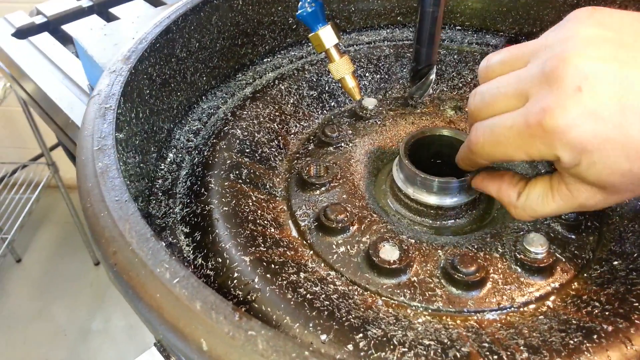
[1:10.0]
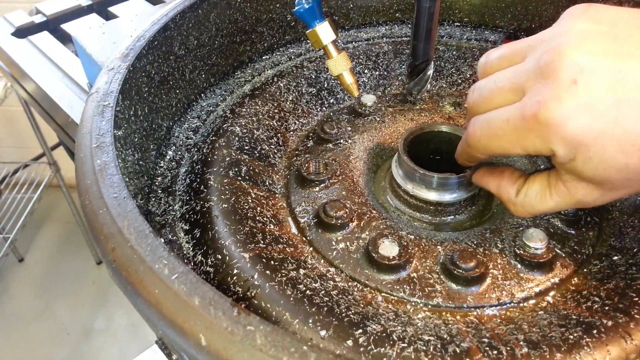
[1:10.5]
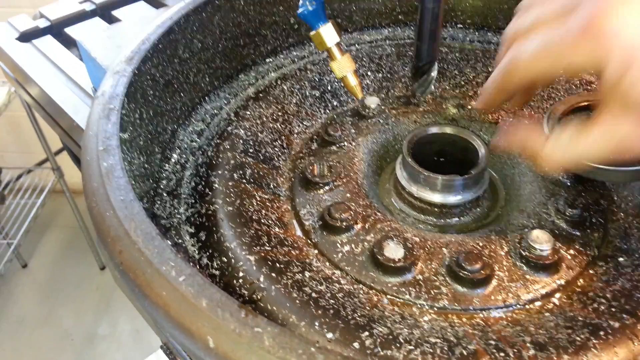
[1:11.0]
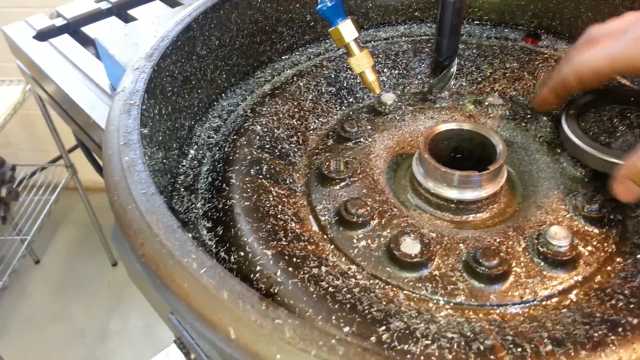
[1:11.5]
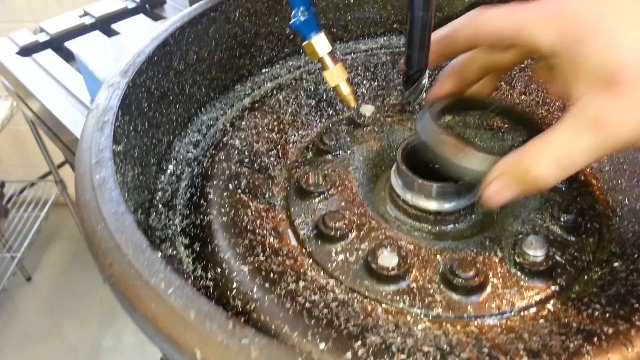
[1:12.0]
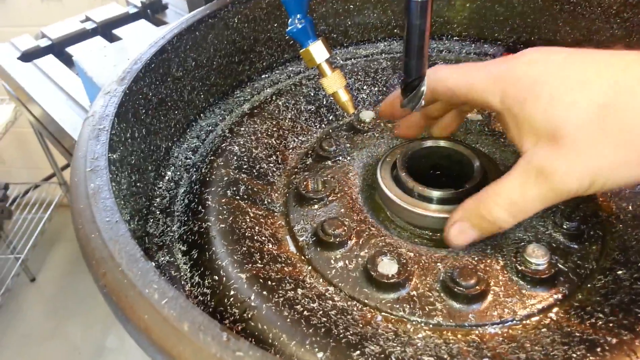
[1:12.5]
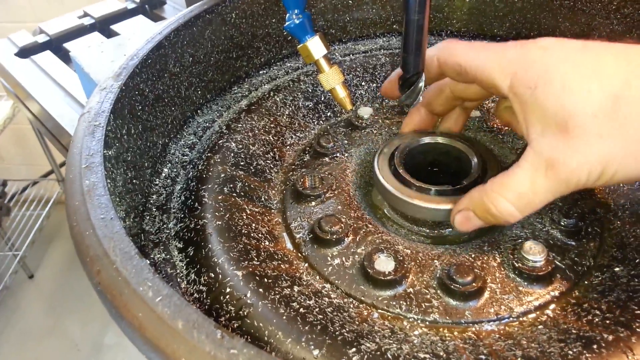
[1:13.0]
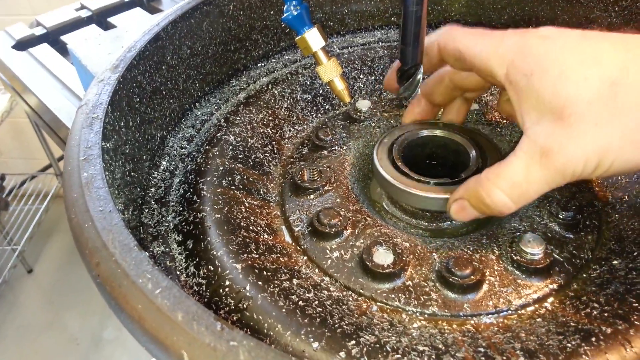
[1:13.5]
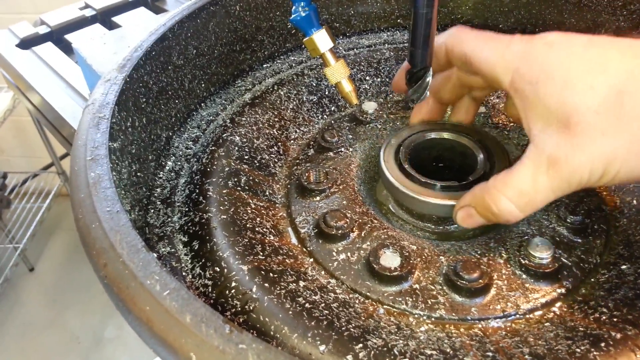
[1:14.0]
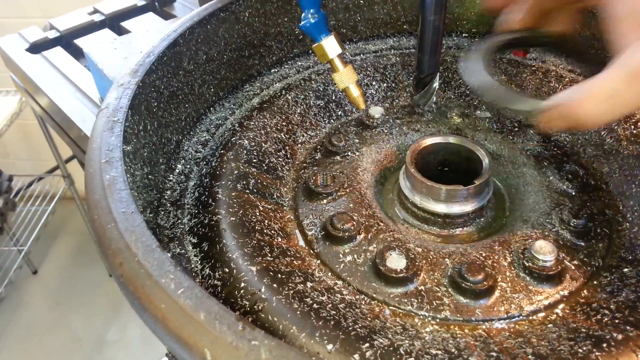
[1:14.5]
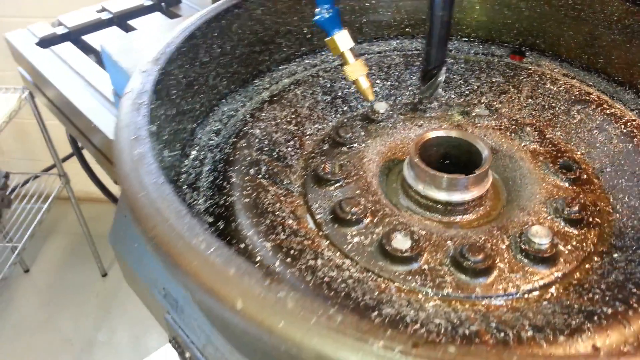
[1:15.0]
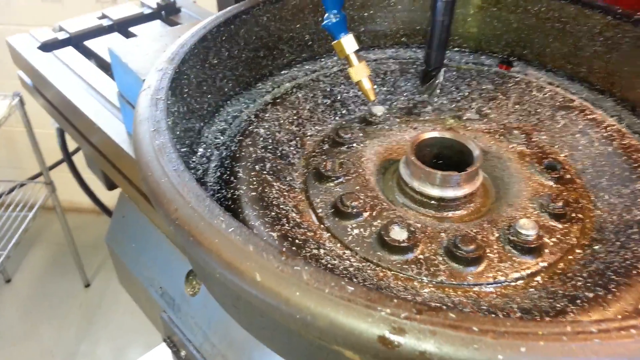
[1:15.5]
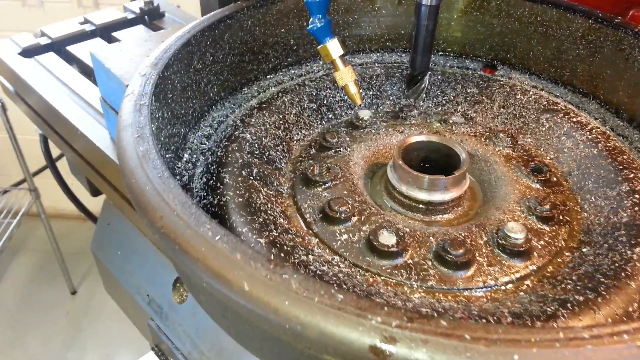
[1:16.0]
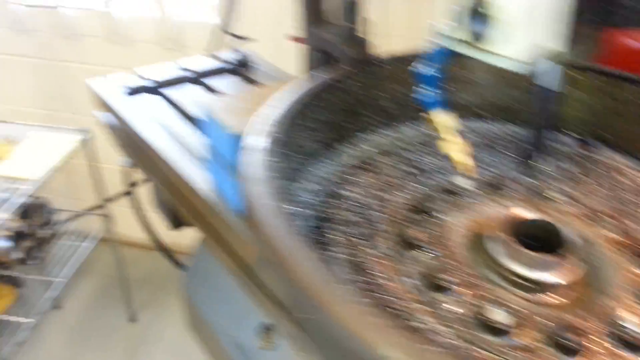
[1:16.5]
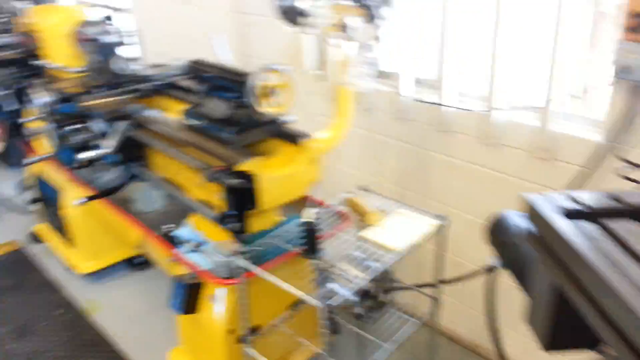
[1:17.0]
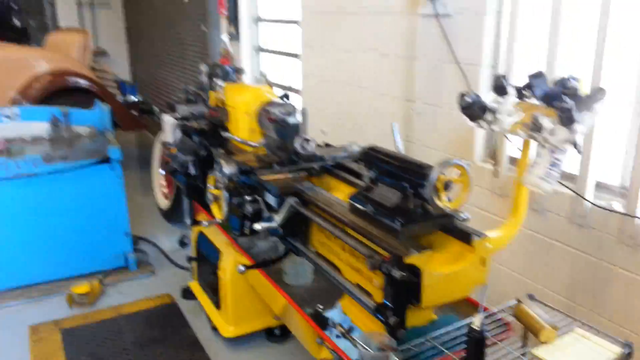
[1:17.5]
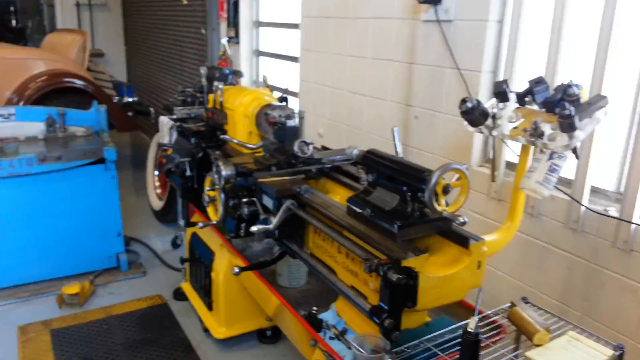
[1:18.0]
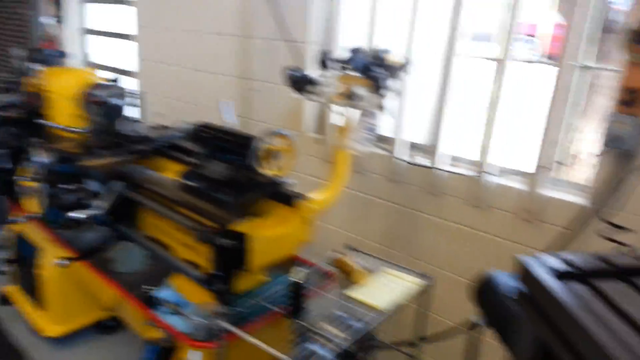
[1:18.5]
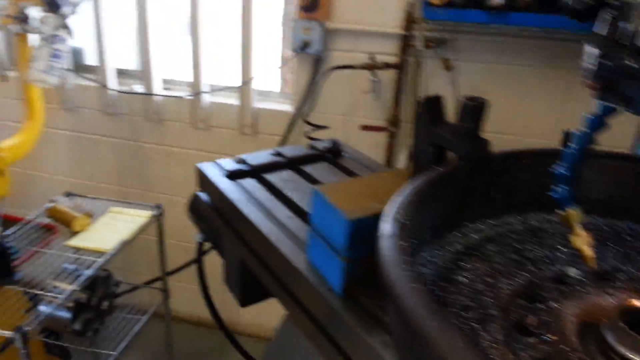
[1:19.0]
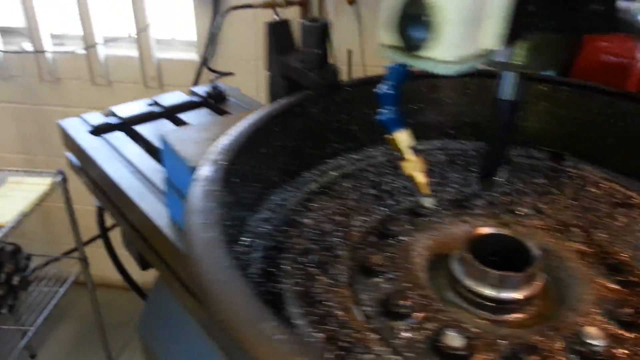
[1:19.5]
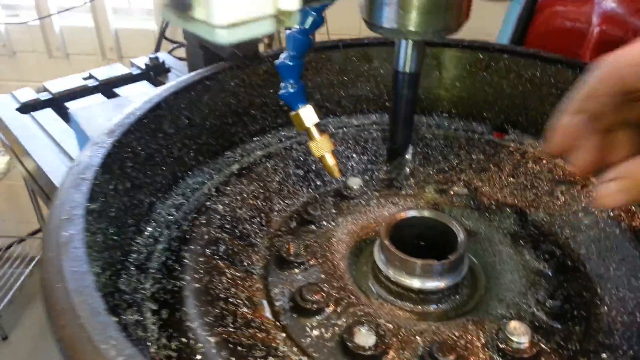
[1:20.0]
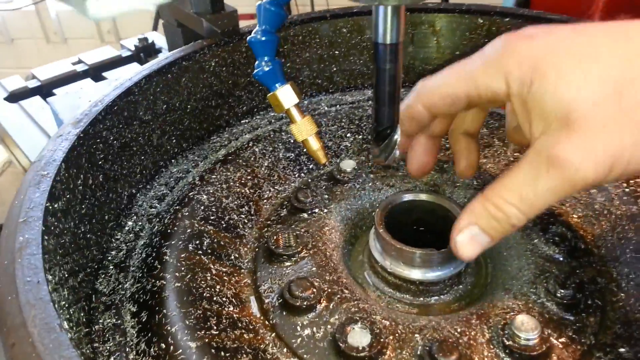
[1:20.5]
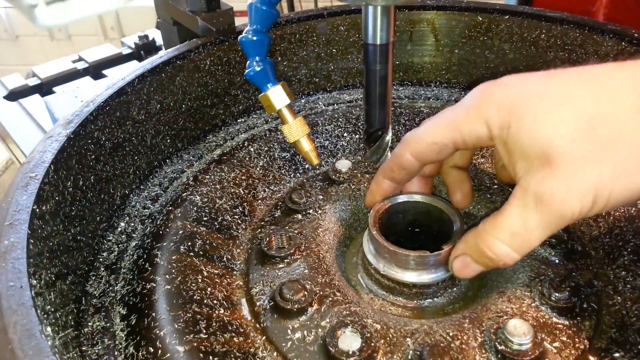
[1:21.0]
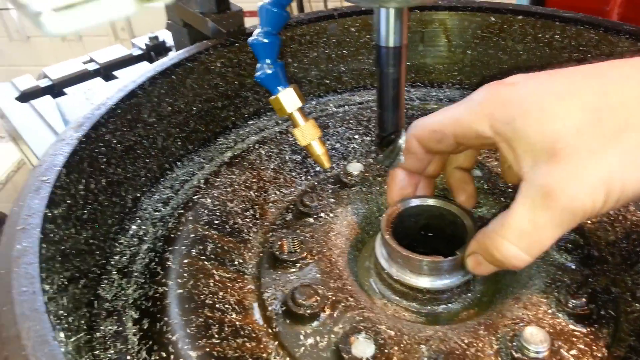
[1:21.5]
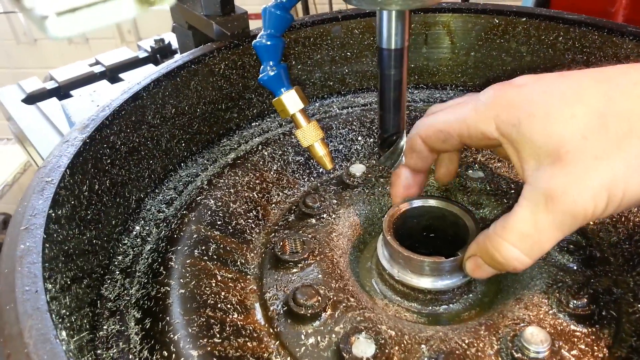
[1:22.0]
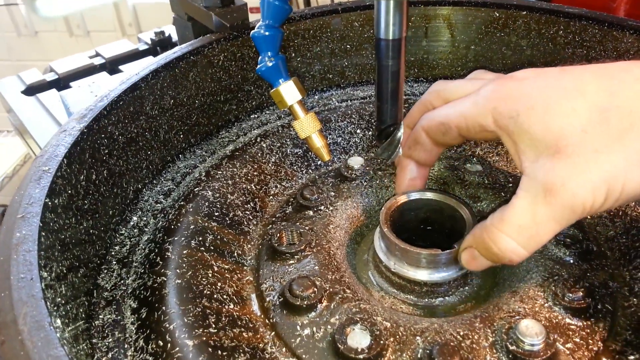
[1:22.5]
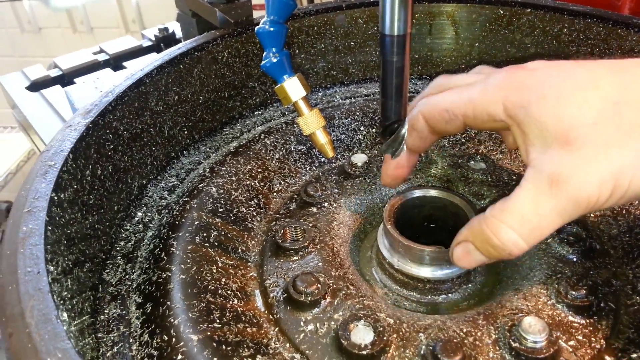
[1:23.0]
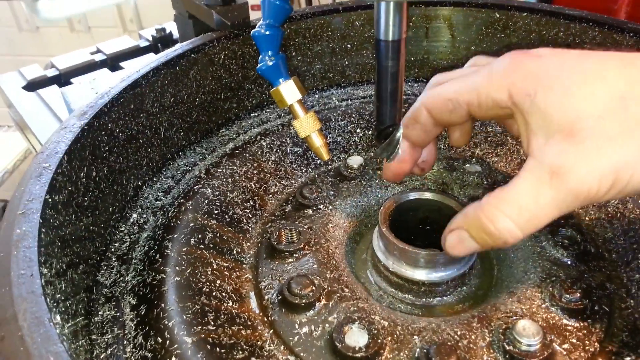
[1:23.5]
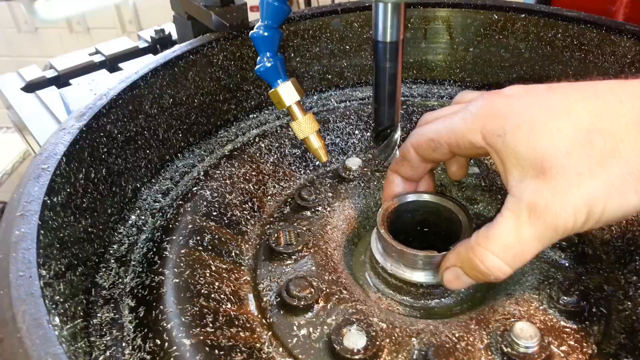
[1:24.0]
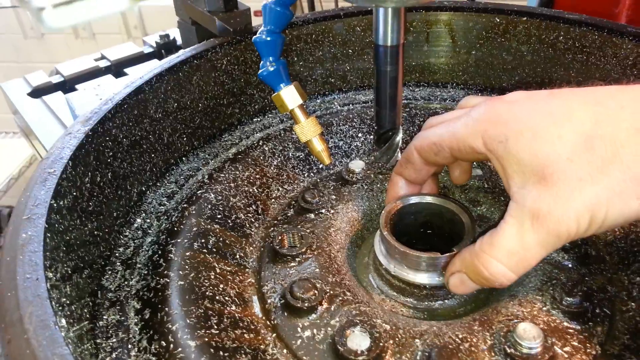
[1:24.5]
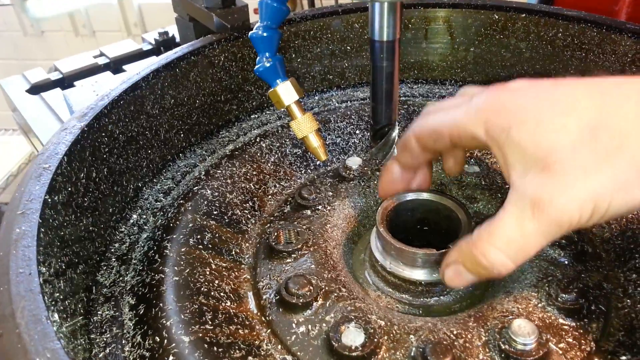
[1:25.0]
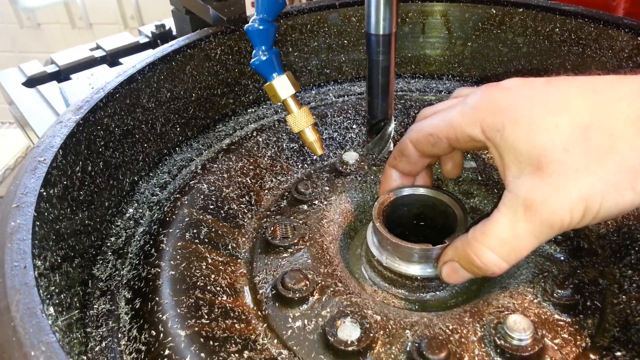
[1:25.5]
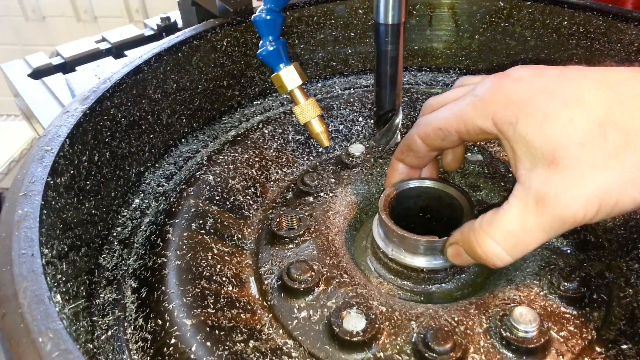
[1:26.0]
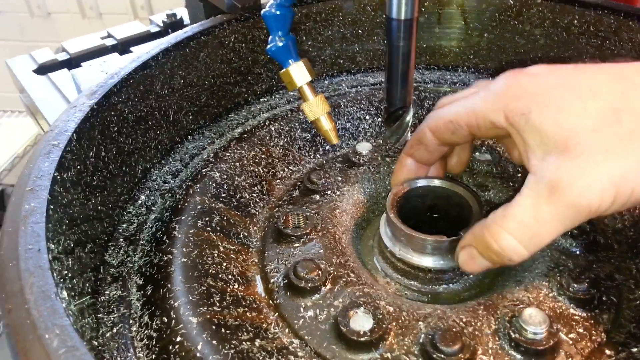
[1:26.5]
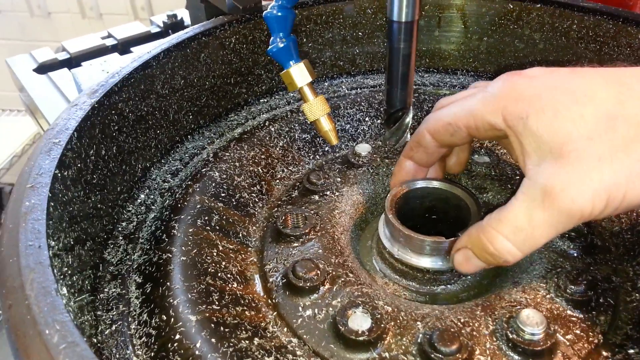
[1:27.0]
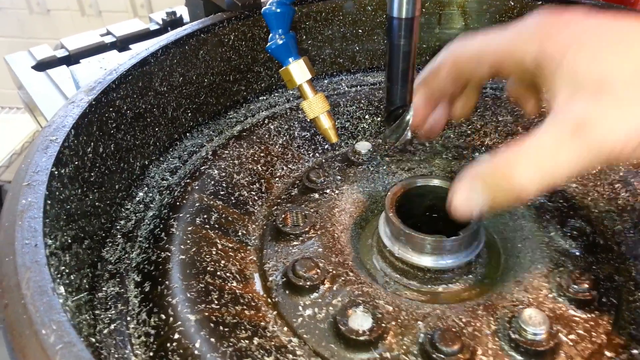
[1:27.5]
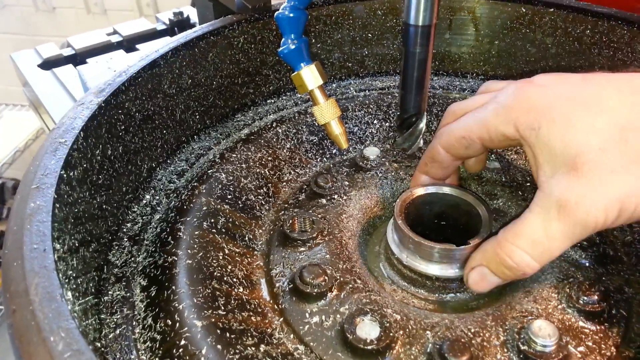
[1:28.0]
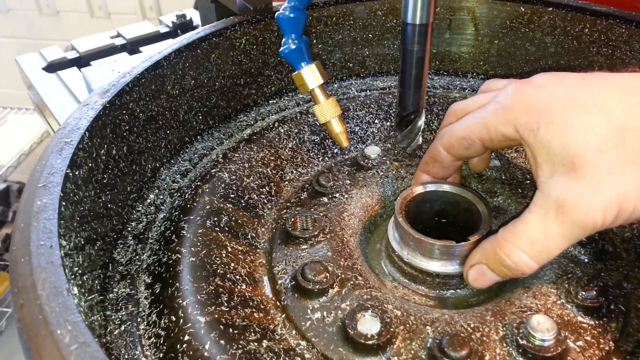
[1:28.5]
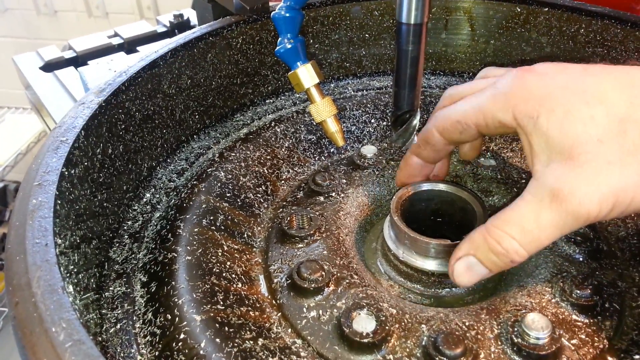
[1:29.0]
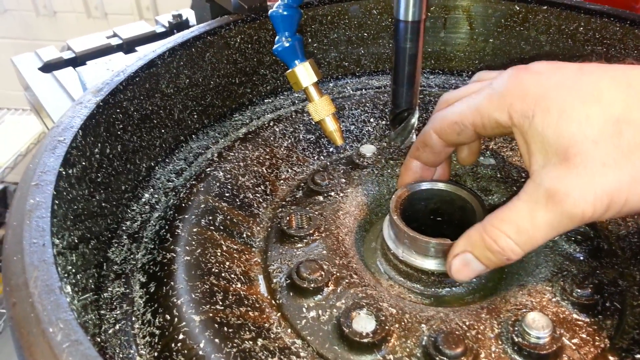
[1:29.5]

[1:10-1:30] A hub is underneath a drill. A finger is inside the center of the hub, as if wiping away anything left behind by the drill, and a thumb rubs up and down over the smooth surface the drill has left. The hand picks up the bearing, puts it over the center, wiggles it around a little, and takes it away. The camera pans to the left toward a yellow piece of machinery, then comes back to the hub. A man puts his hands around the center of the hub, with fingers around it on both sides, and moves them around as if to gauge how big it is. Meanwhile, the hub shows a lot of bolts in a circle all the way around the outside of the rounded center.